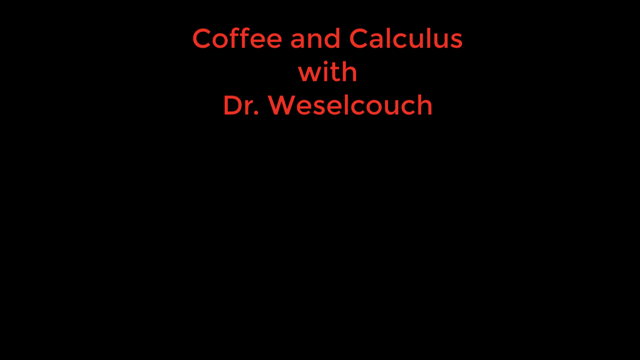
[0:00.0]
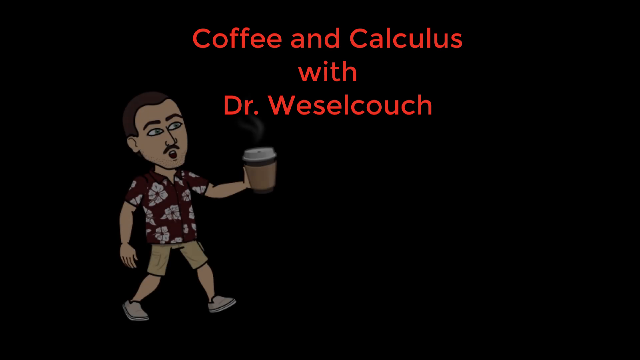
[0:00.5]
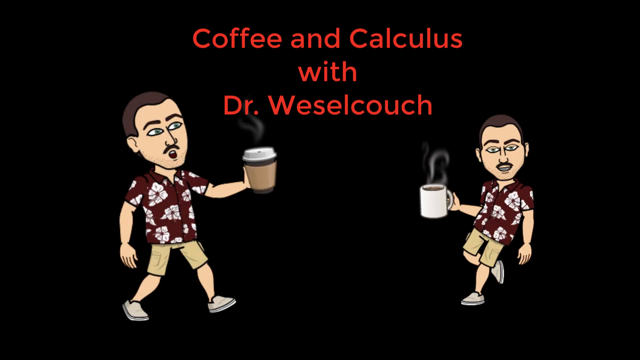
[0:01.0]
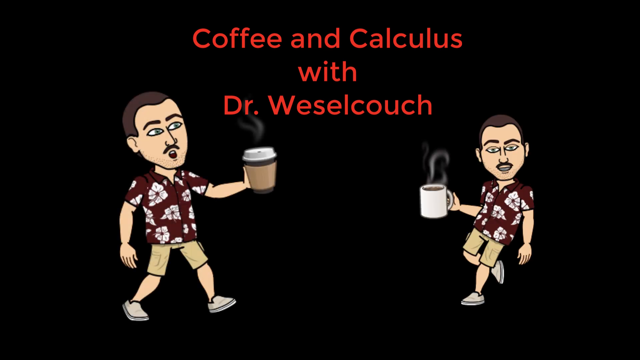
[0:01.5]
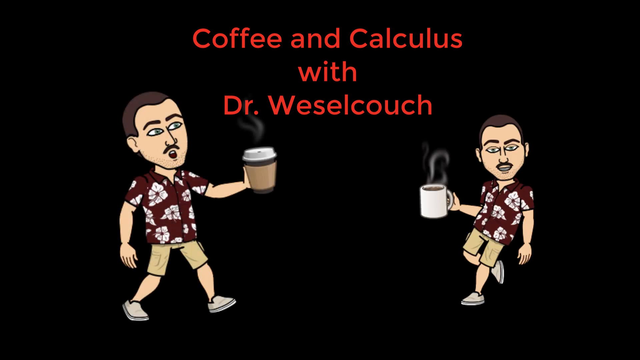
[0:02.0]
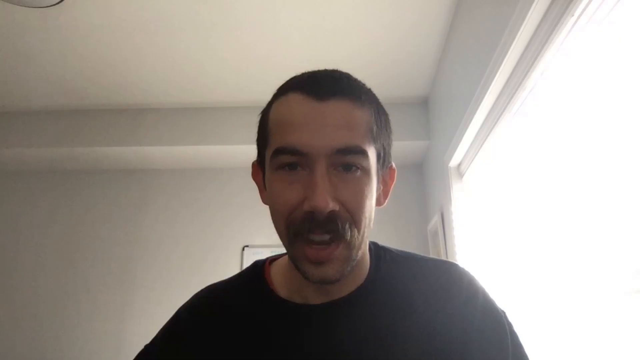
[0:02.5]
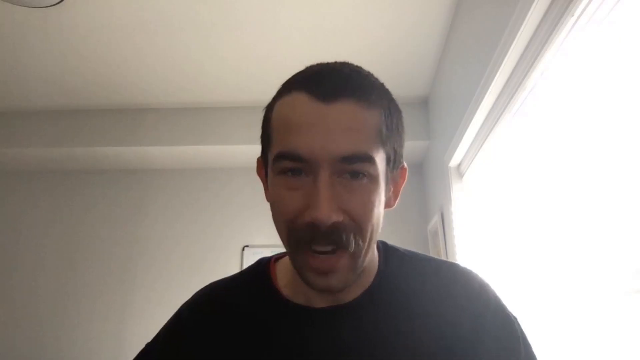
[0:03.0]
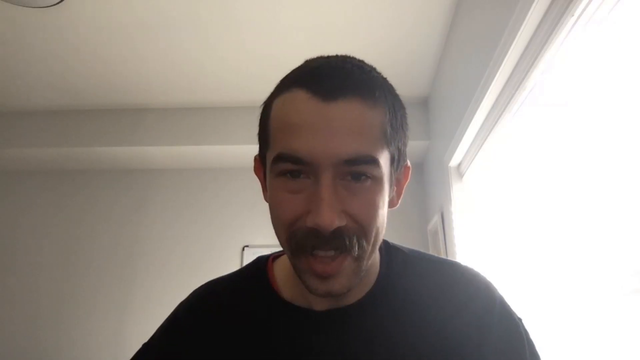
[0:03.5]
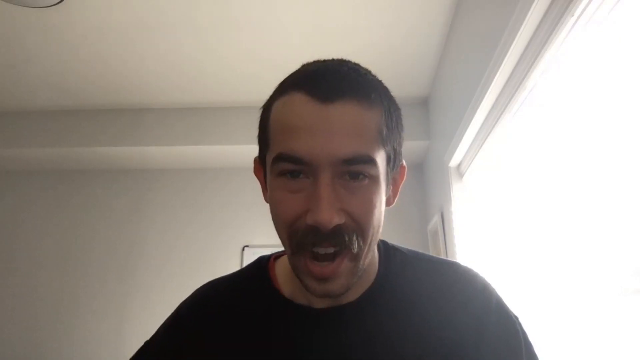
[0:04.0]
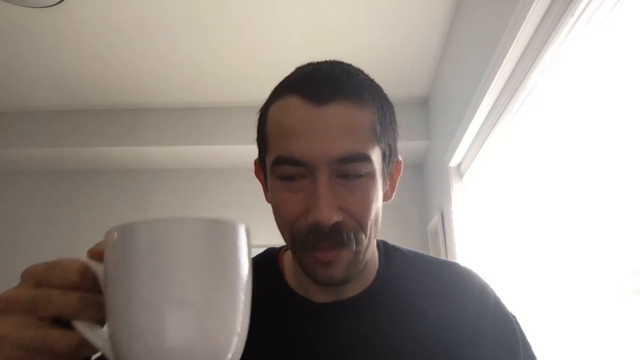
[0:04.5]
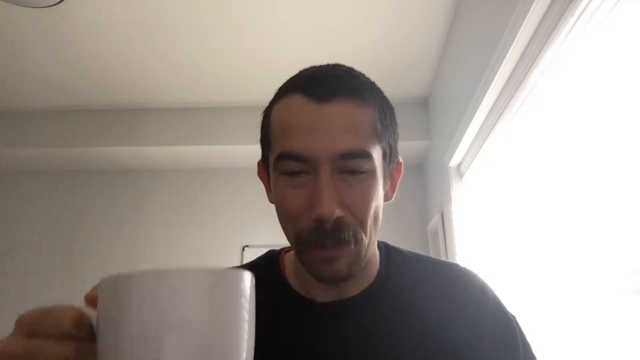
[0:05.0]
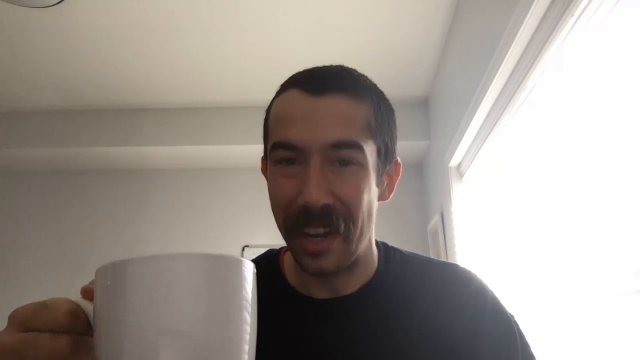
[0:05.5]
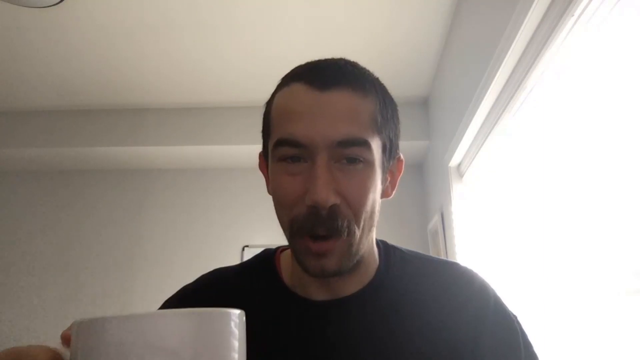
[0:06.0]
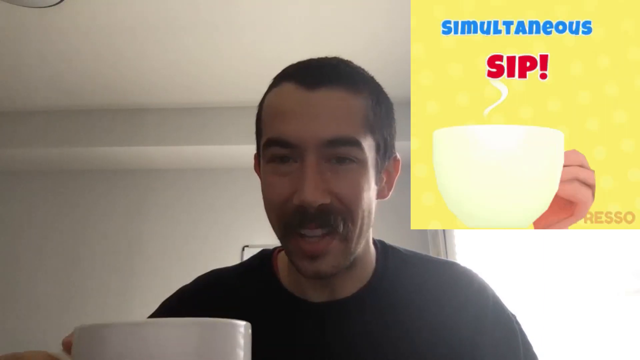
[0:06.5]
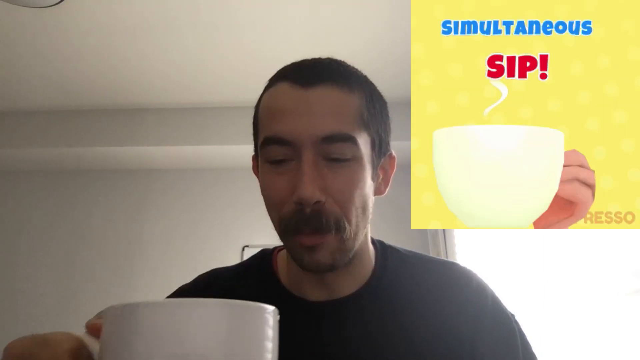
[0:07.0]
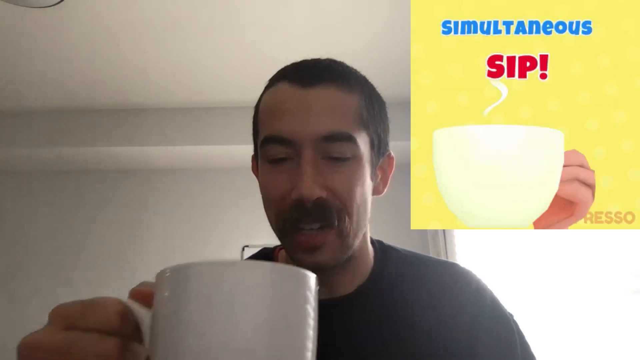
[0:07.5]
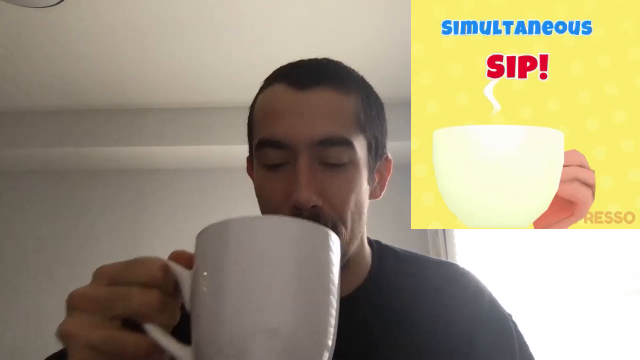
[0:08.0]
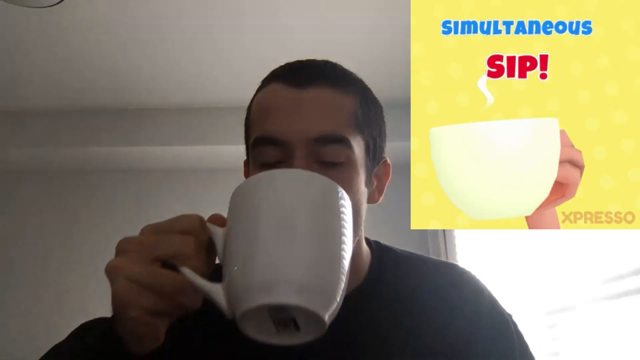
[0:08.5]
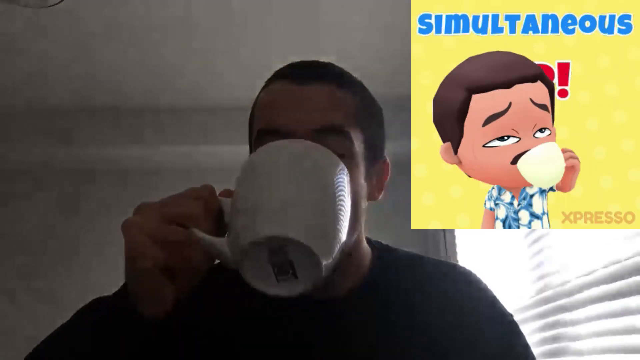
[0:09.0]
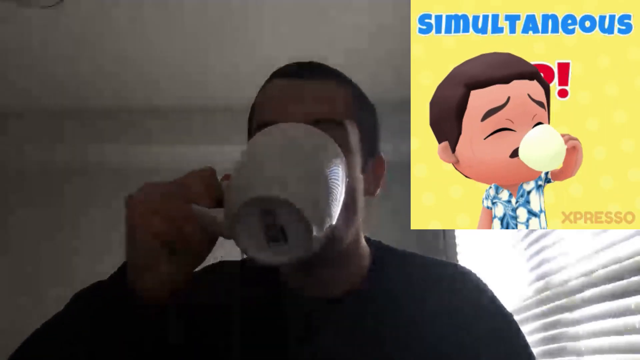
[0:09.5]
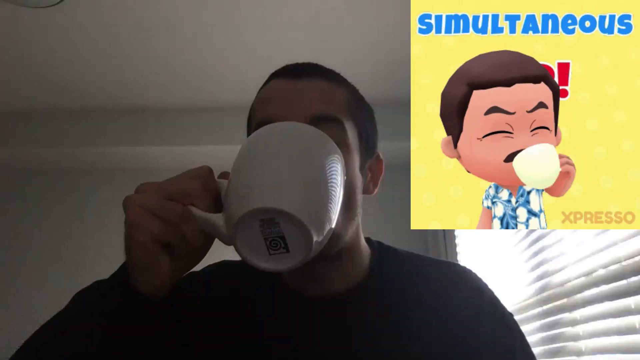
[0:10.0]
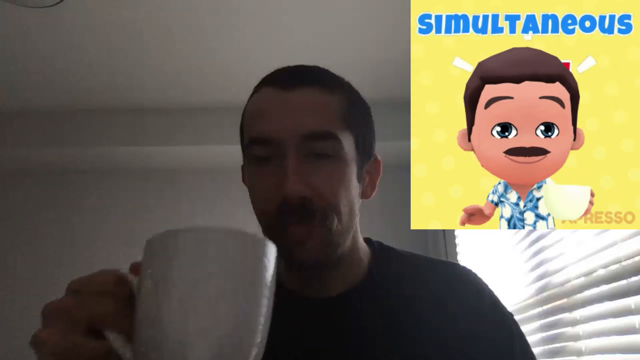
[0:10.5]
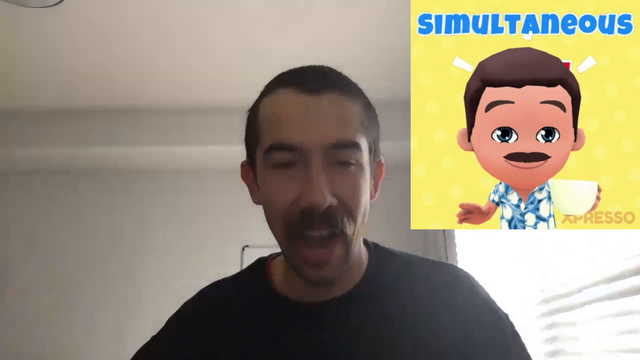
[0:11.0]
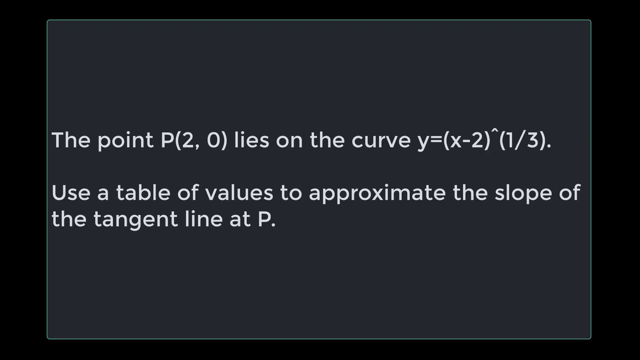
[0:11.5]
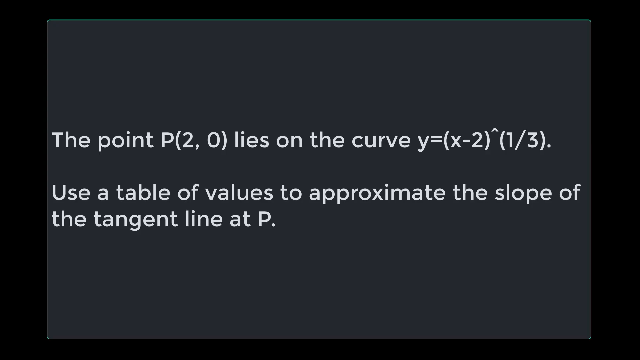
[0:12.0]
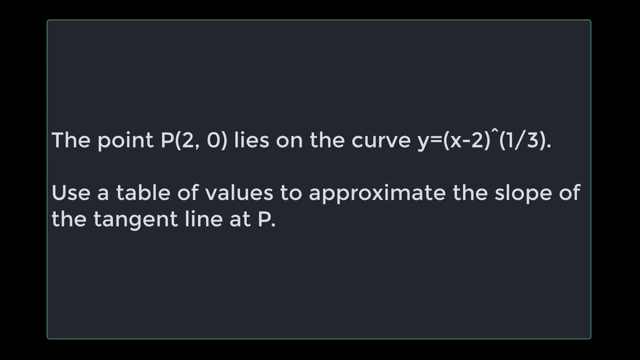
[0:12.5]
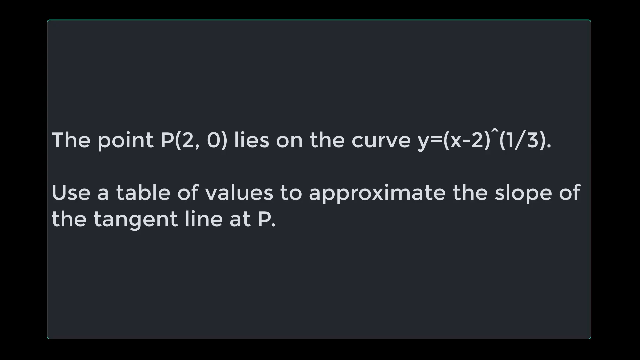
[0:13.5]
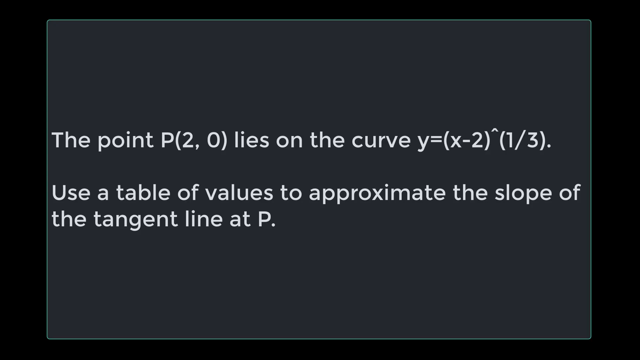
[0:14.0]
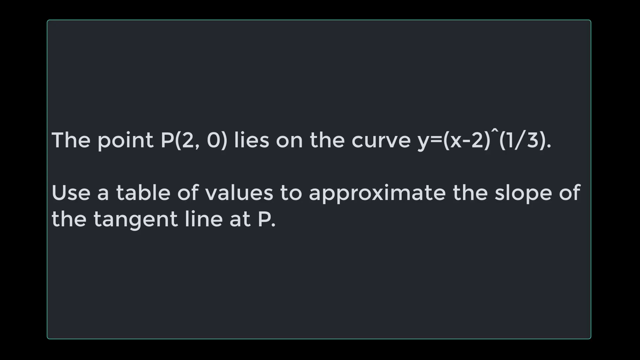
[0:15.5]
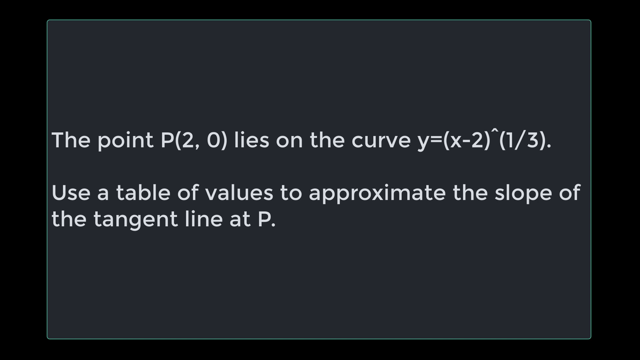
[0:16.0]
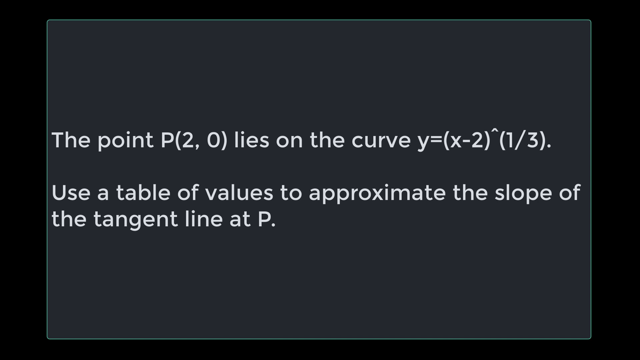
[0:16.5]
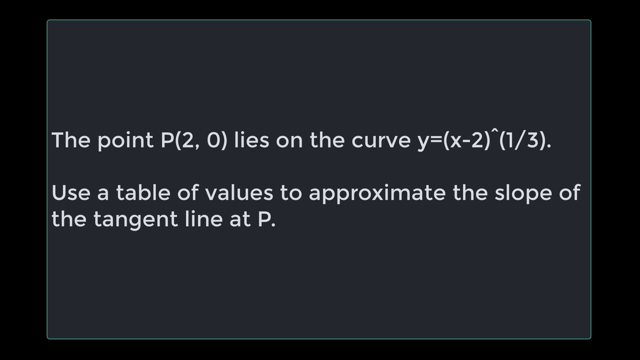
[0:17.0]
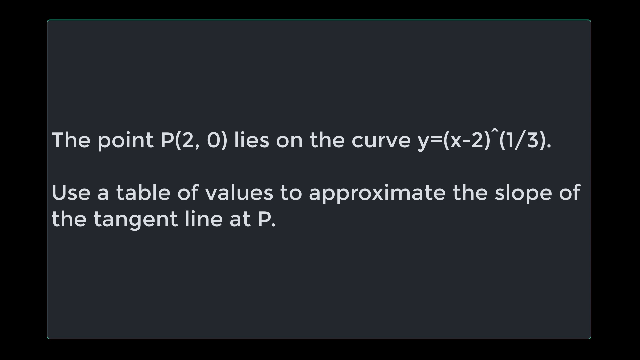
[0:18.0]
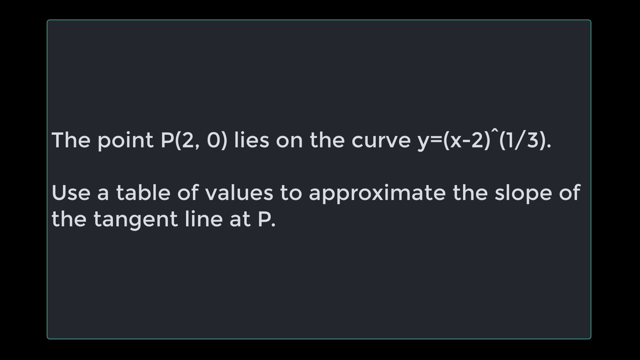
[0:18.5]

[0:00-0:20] The screen is solid black, and orange text comes up reading "coffee and calculus with Dr. Wesson Couch." On the right side is a drawn cartoon gentleman looking straight at the screen; he has brown hair and a mustache and holds a white cup with a black substance in it, with white smoke coming out. His left foot is on the ground and his right foot is beneath him, slightly toward the back. On the left side is a person facing to the right and looking toward the right of the screen, wearing a brown shirt with white flowers. His left hand is up in front of him holding a brown cup that is semi-brown with a white top on it like a cap, and white smoke rises into the air from it. His left leg is slightly bent in a walking position. A gentleman in the middle of the screen holds up a white cup, pointing it toward the camera. On the right side, text says "simultaneous sip," and a left hand holds a white cup. The gentleman takes a drink from the cup. The next screen shows white lettering that begins "the point P (2, 0) lies on the curve y = (x - 2)", and the next line begins "we use a table of values to approximate the".